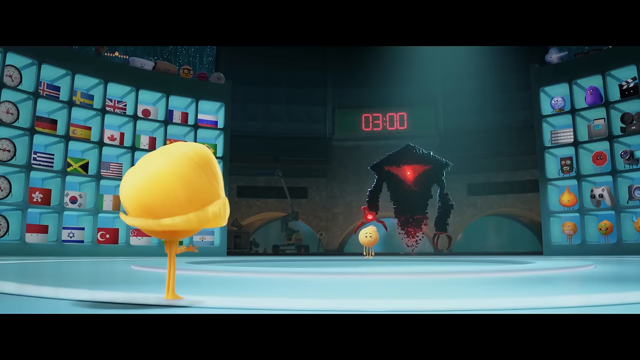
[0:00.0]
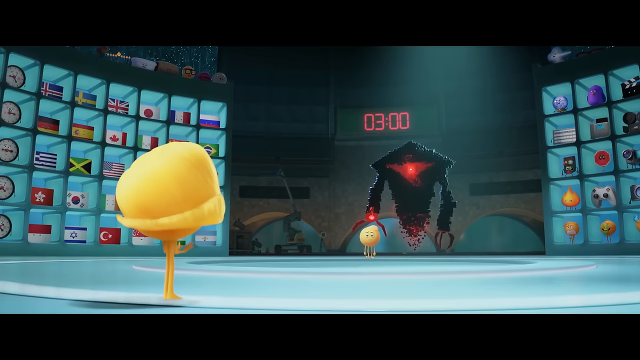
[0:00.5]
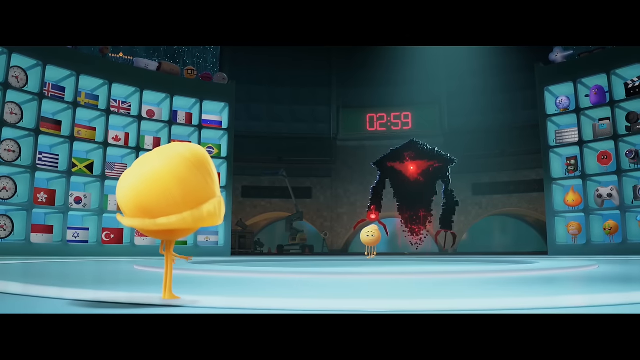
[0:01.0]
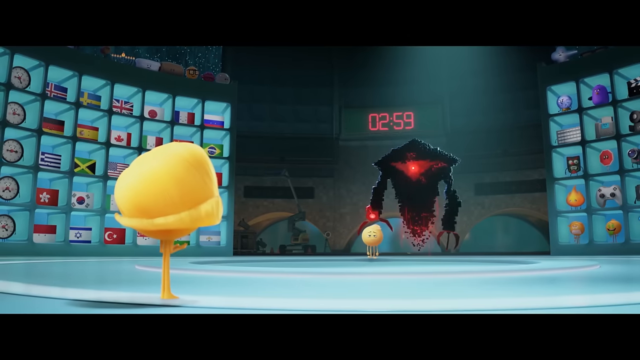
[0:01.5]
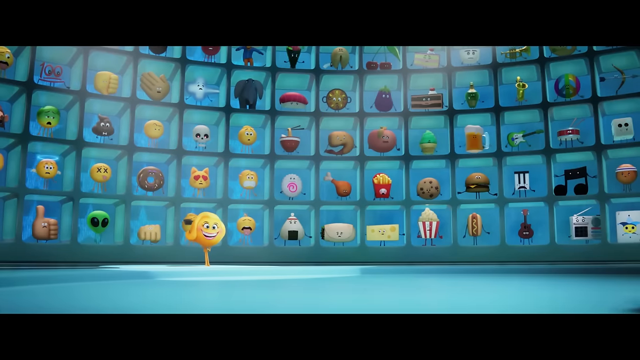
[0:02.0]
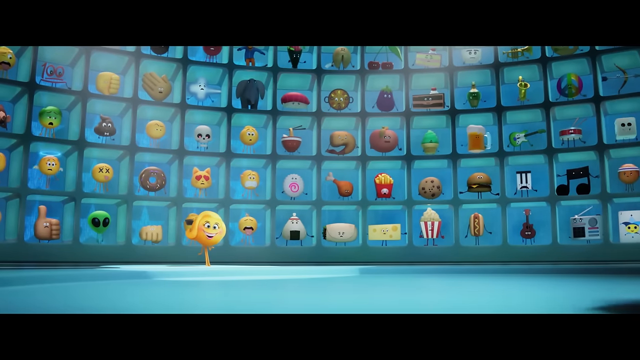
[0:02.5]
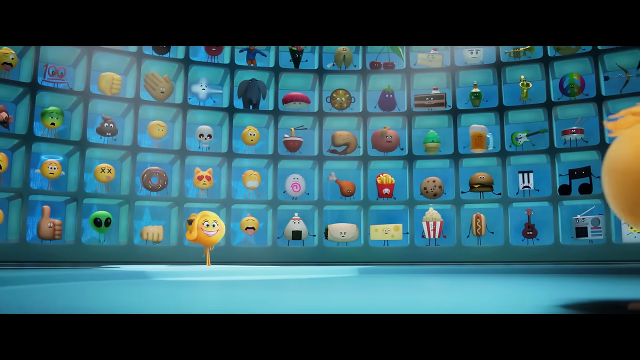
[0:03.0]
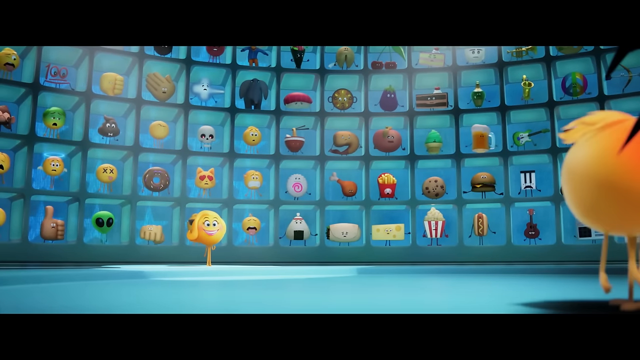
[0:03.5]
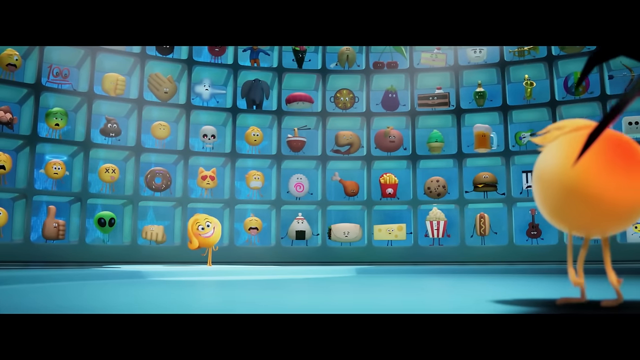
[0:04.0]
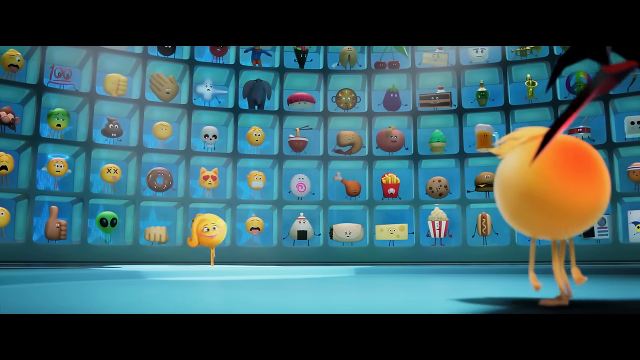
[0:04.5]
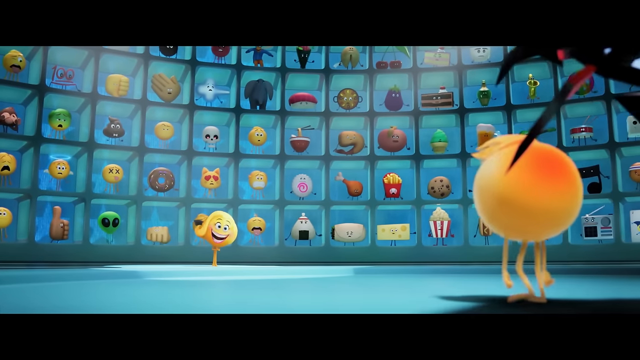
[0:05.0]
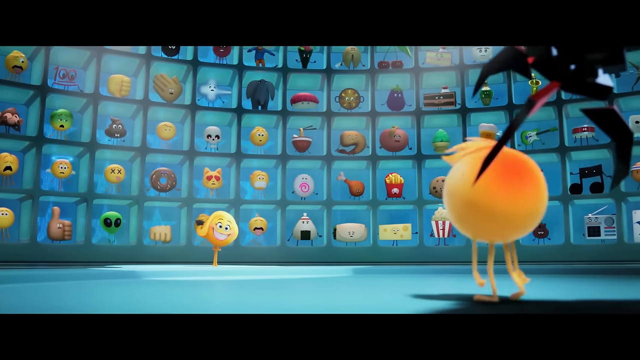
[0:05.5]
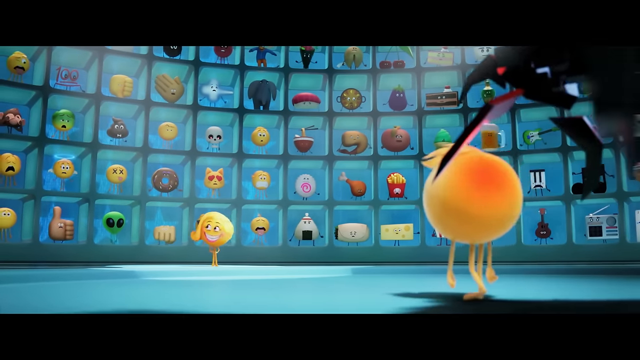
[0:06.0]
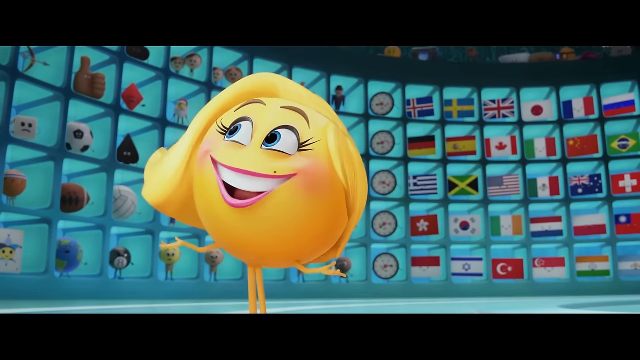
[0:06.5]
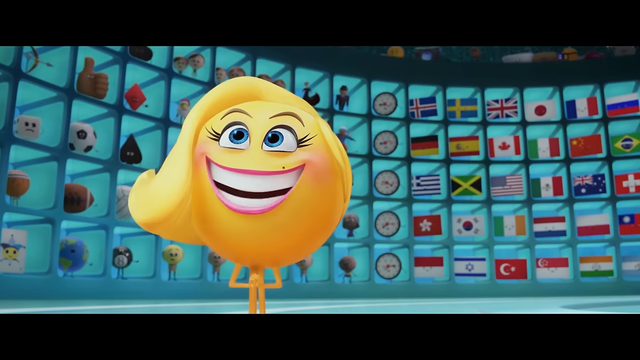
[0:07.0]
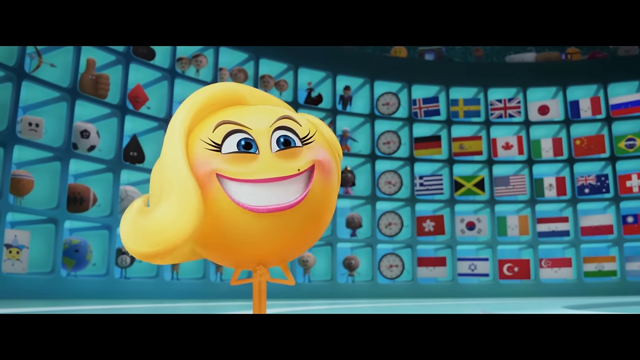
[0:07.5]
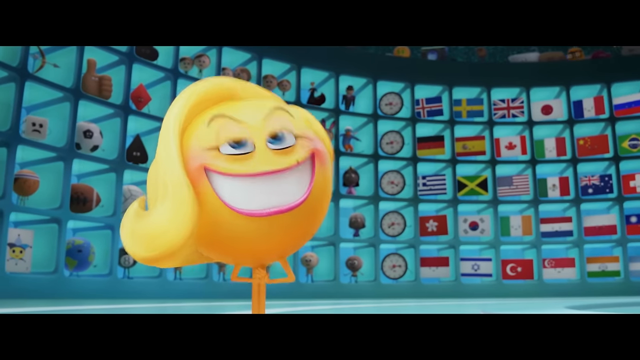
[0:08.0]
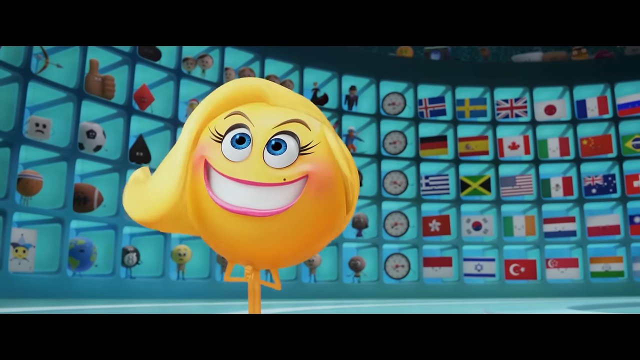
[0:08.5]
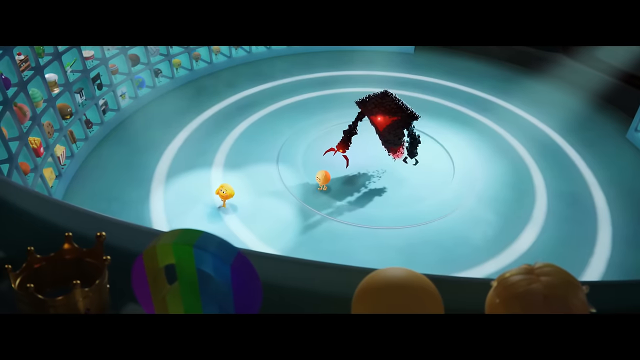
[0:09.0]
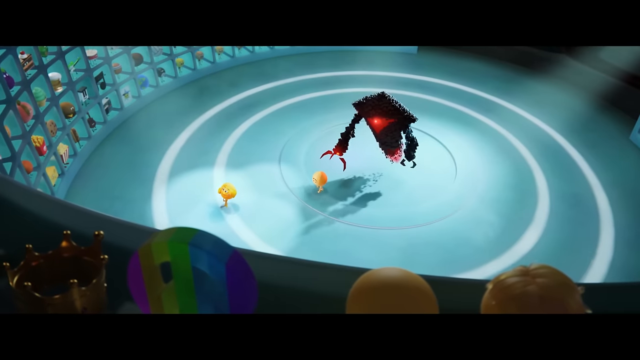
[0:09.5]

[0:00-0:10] A scene from the Emoji movie shows Smiler, who is inside a chamber and is being approached by another emoji. Emojis are locked in chambers in the background, along with flags such as those of Germany, Greece, Jamaica, Korea, Israel and Tunisia. Plenty of emojis are locked in the chamber, and some of them are animated to move. The approaching emoji is yellow, and behind him is a black beast with a red, triangularly shaped eye.